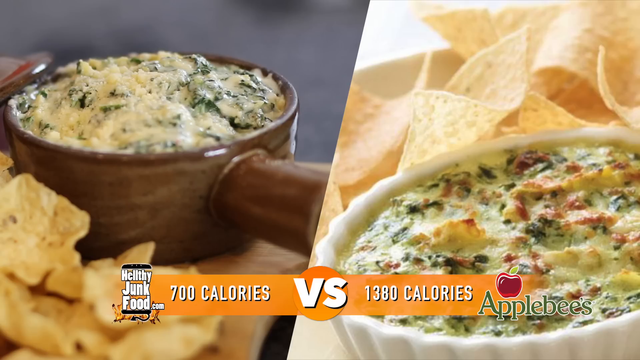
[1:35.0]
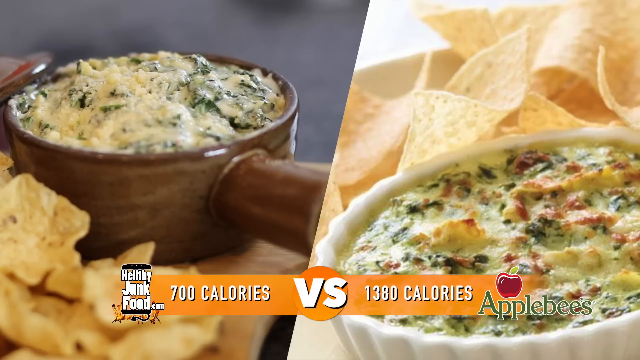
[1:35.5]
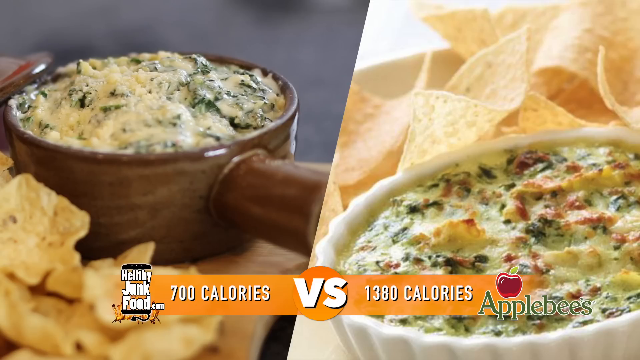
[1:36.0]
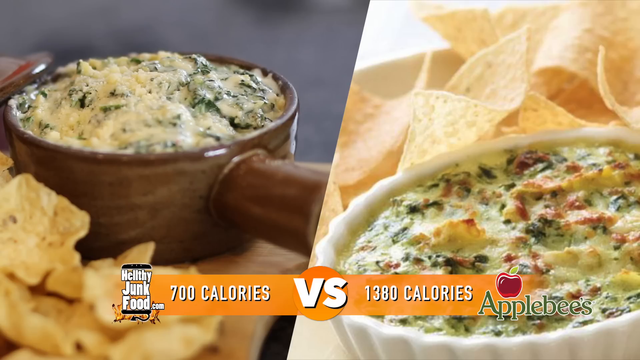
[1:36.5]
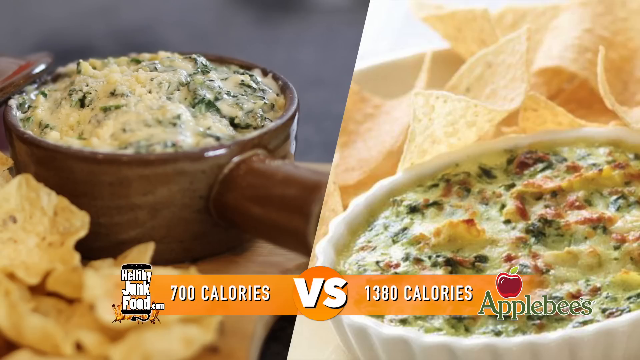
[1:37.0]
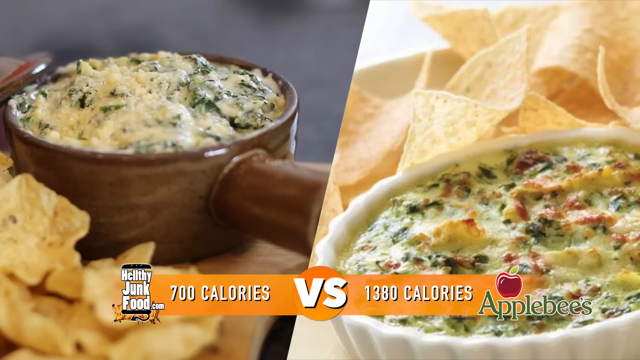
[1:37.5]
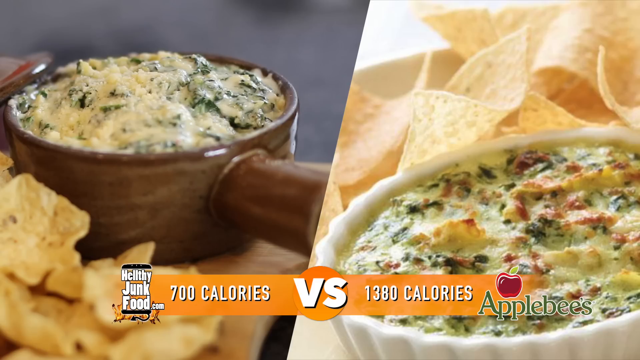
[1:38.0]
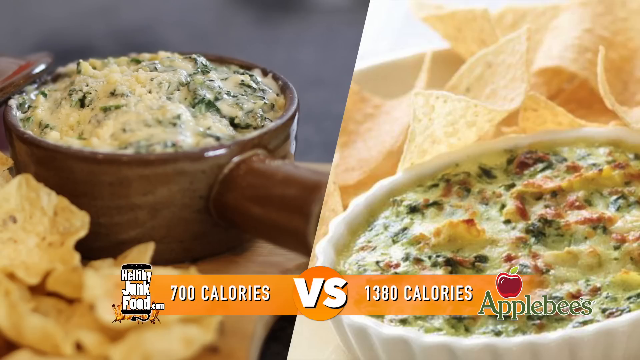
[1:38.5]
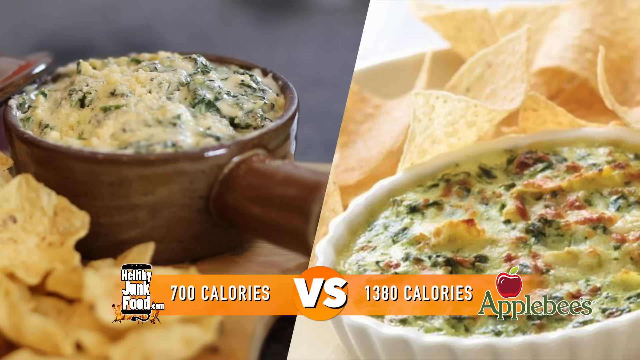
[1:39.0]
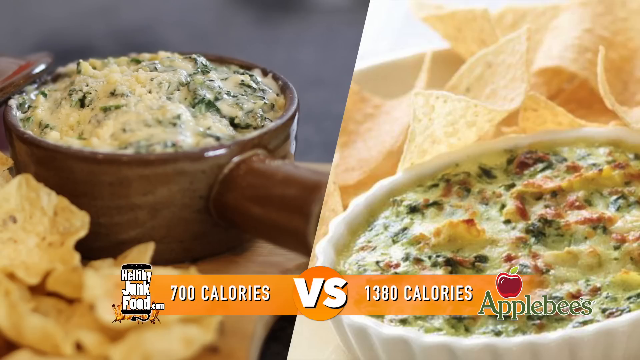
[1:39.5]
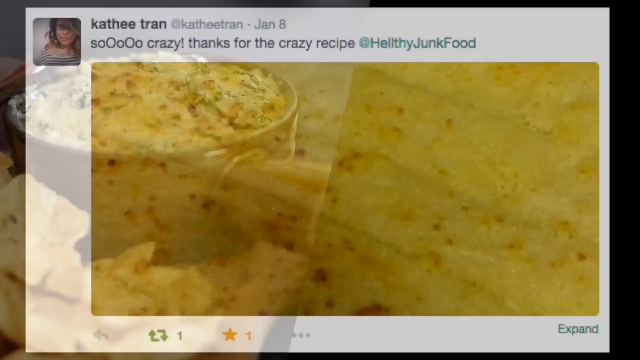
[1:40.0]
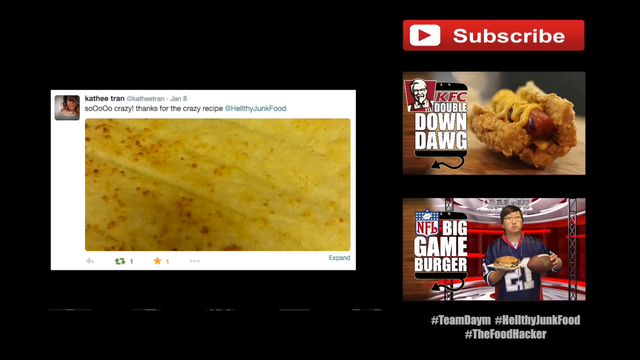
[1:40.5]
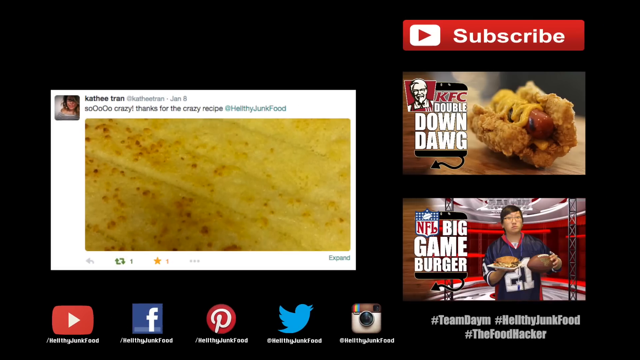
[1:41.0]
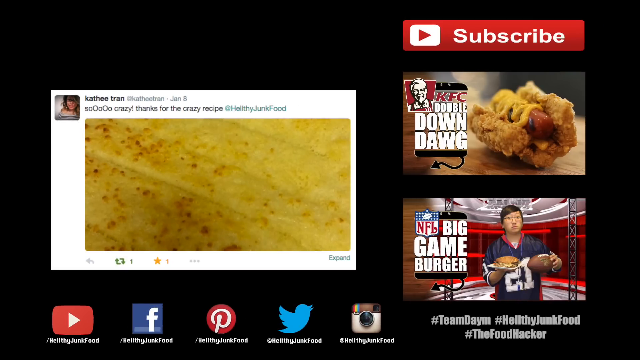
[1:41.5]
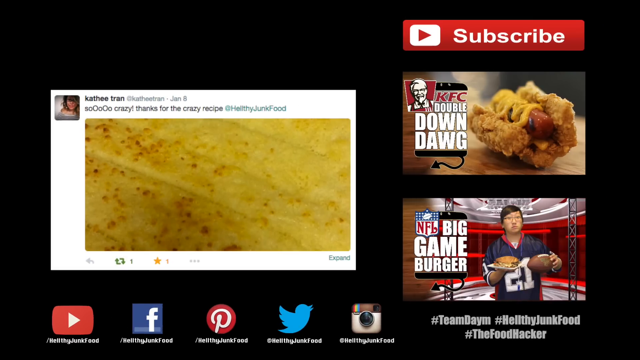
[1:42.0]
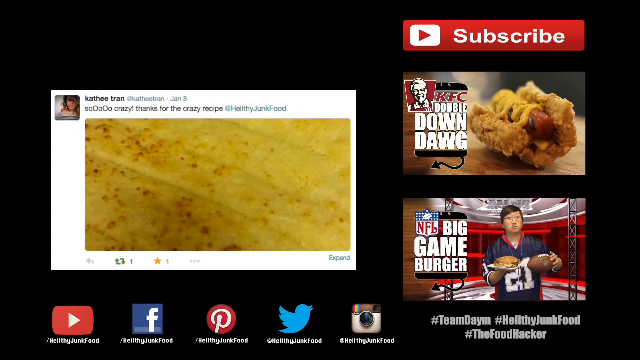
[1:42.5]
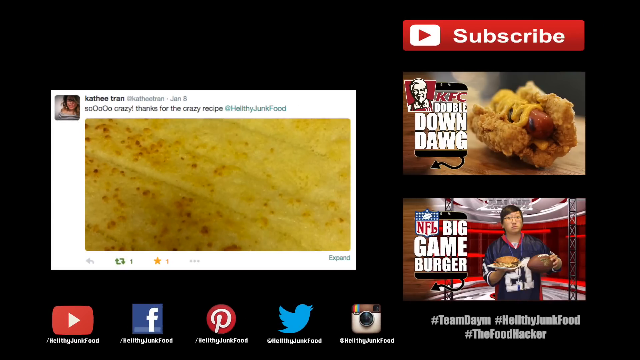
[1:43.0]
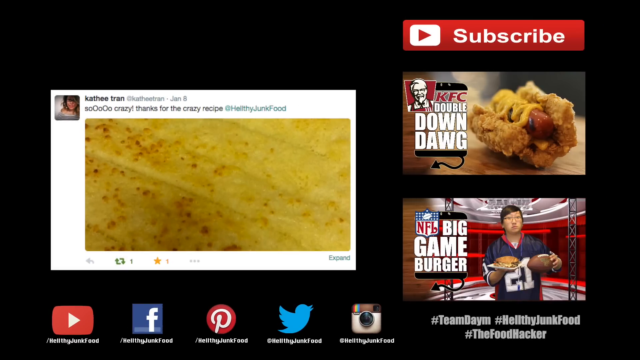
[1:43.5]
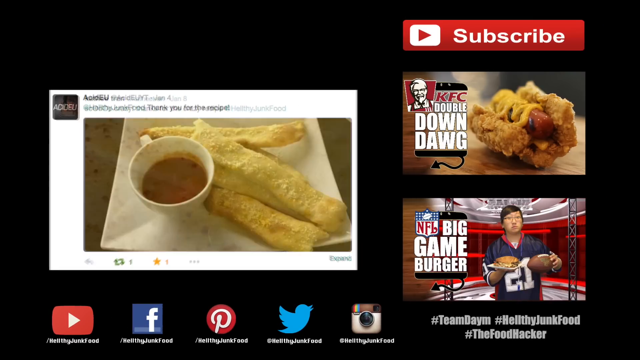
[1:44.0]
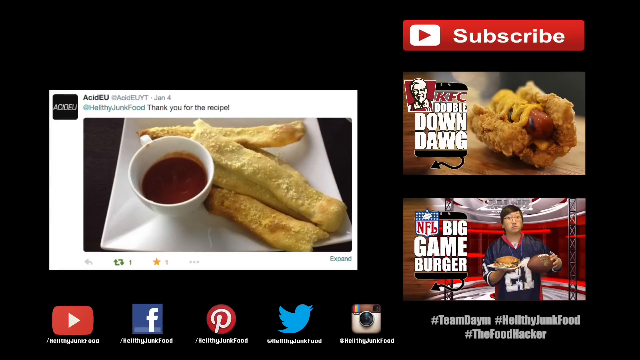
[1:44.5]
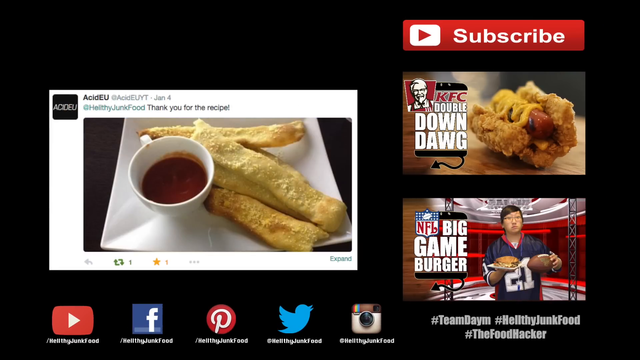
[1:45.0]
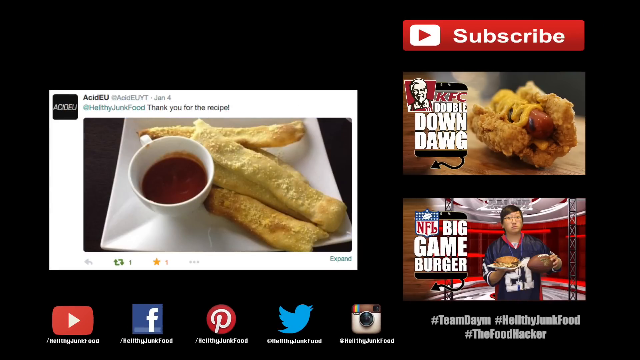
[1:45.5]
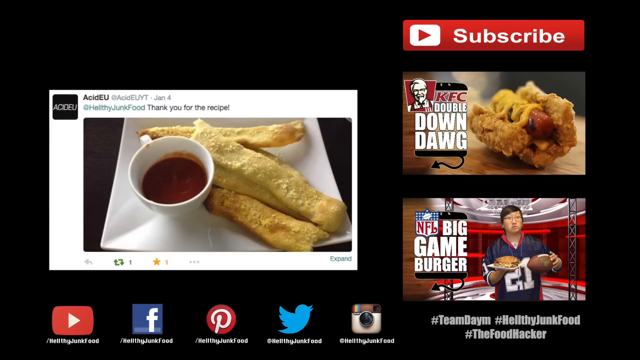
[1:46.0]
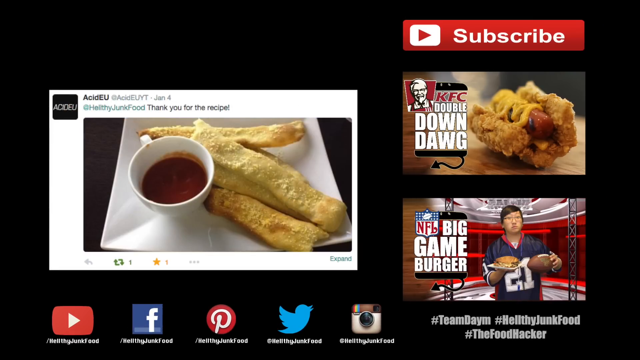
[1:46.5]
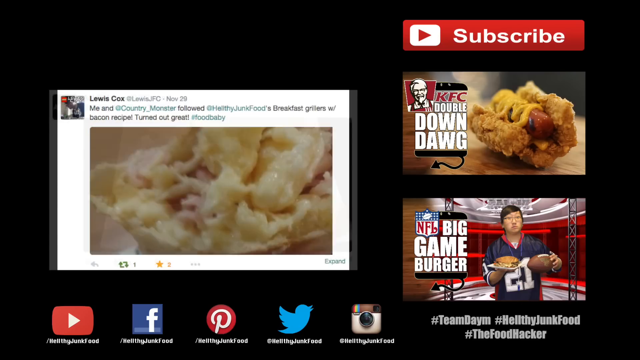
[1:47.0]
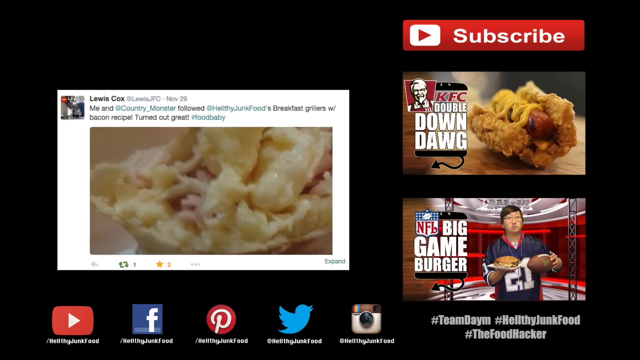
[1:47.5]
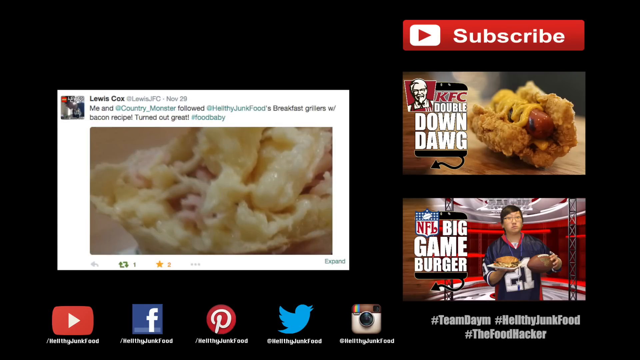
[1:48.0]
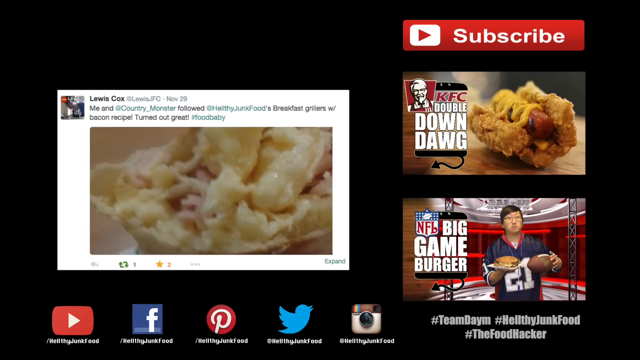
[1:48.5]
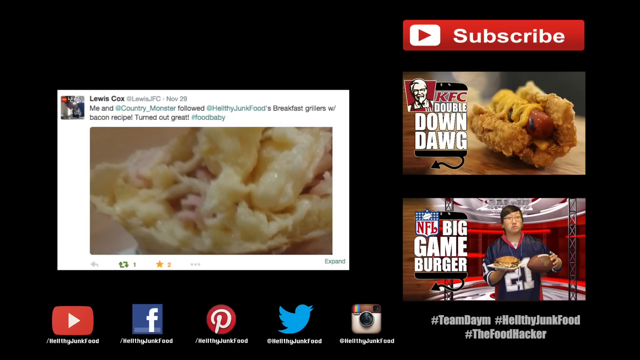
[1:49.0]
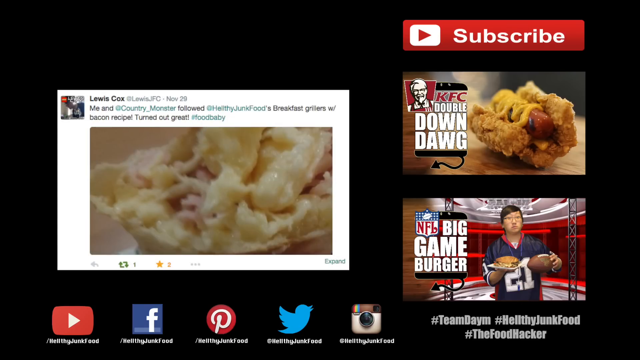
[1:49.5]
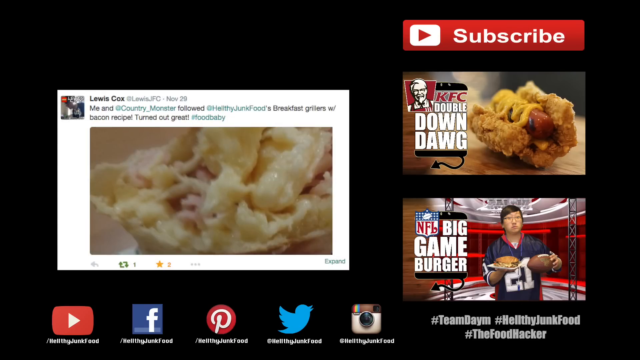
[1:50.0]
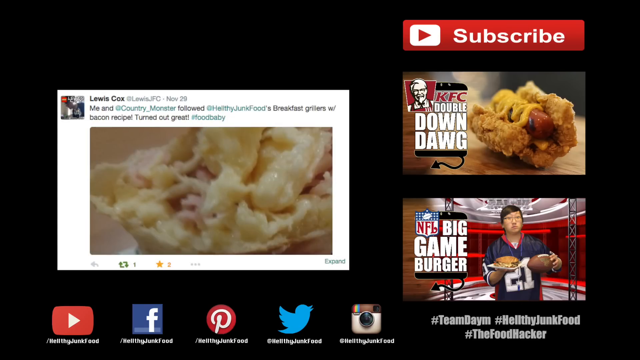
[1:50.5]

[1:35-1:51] The finished spinach dip, very creamy, comes out of the microwave in the brown ceramic pot cooker, looking almost restaurant-made. The pink pig is at the bottom right. A yellow chip is dipped into the pot, and some of the creamy, cheesy dip comes off with it. The dip itself is yellow with a hint of green. Then a comparison shows "healthy junk" at 700 calories, on the left, versus Applebee's at 1380 calories.